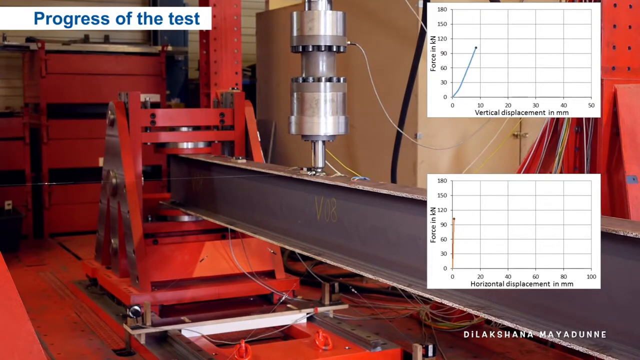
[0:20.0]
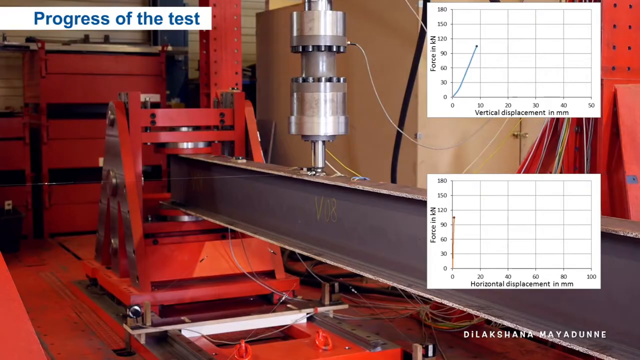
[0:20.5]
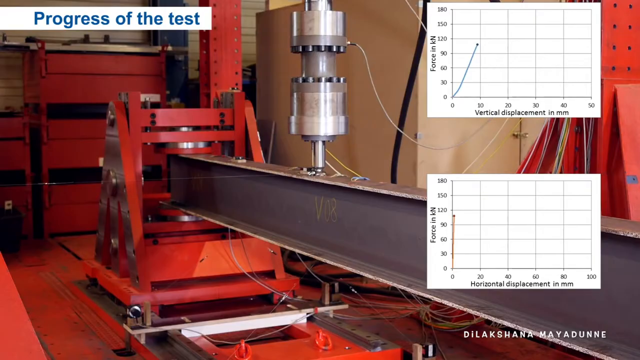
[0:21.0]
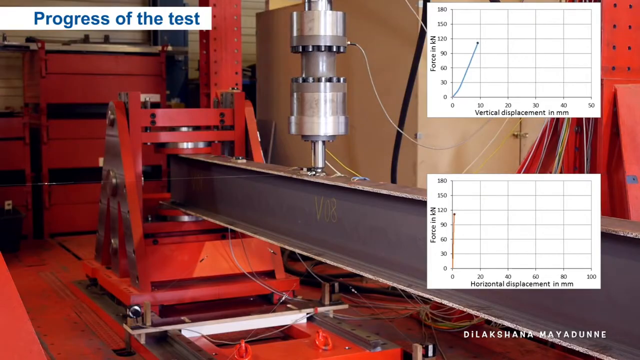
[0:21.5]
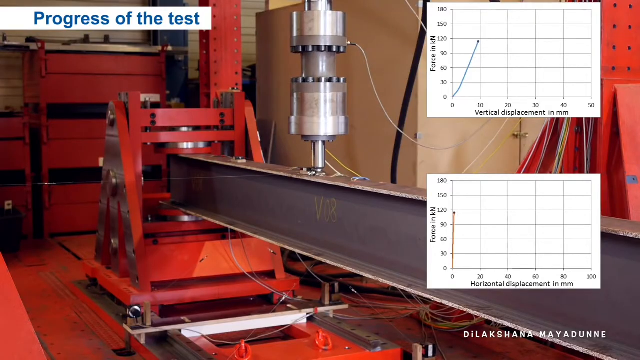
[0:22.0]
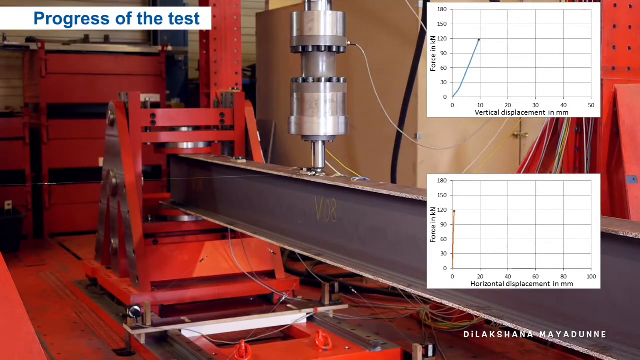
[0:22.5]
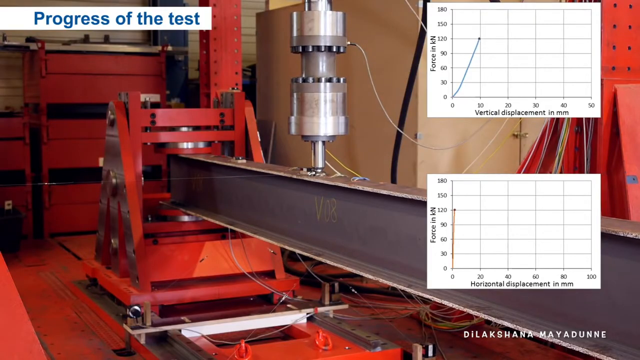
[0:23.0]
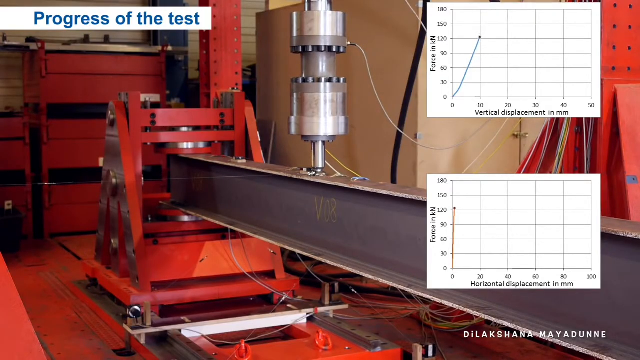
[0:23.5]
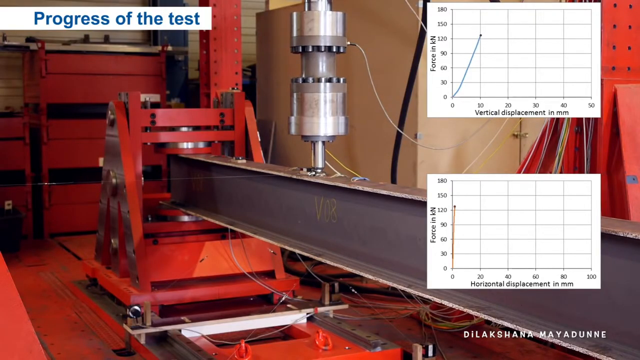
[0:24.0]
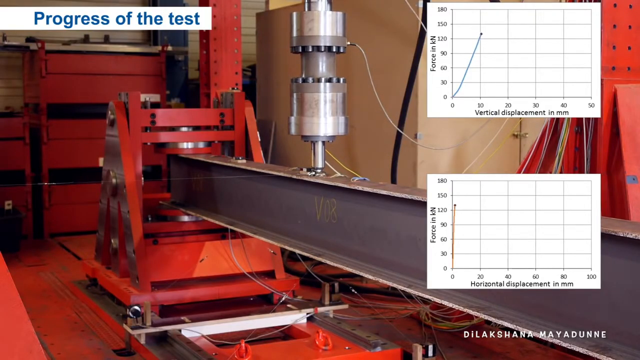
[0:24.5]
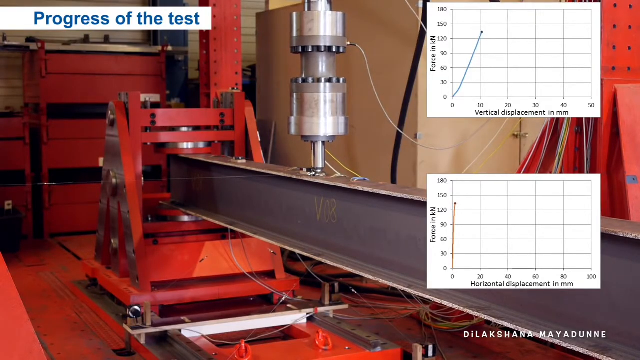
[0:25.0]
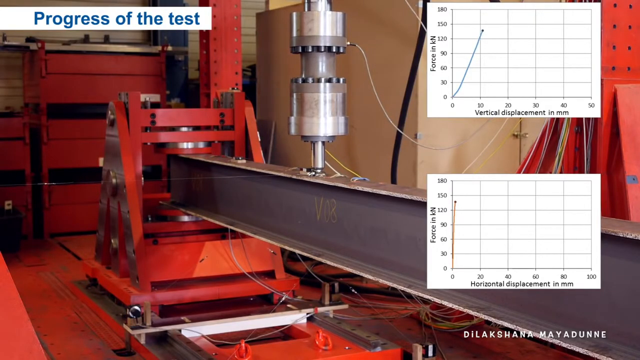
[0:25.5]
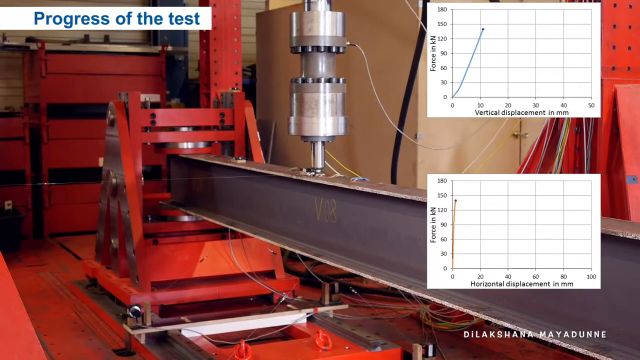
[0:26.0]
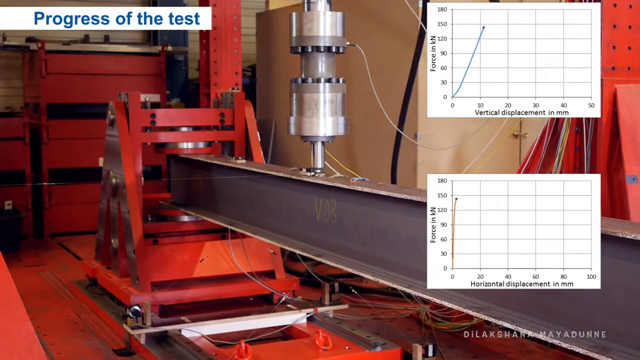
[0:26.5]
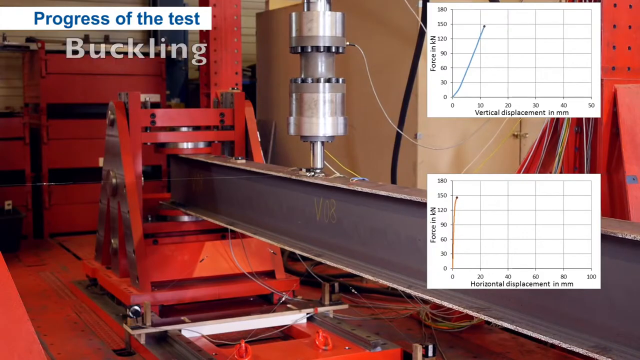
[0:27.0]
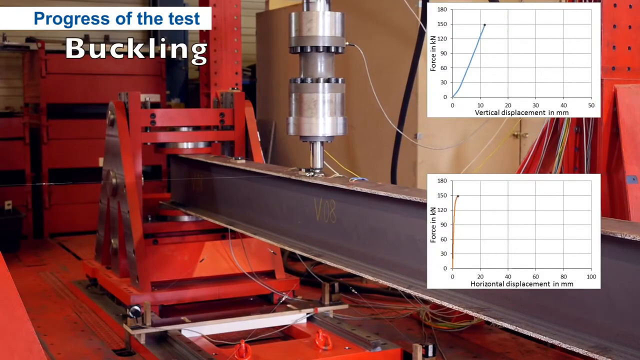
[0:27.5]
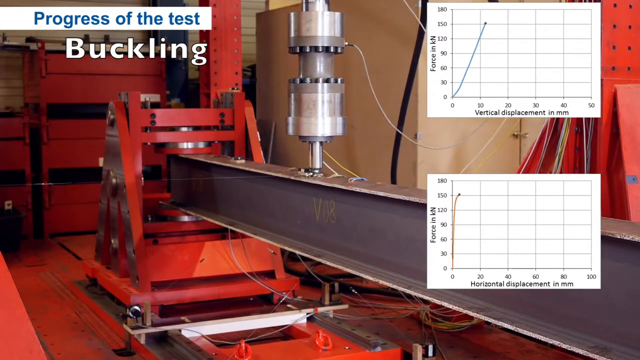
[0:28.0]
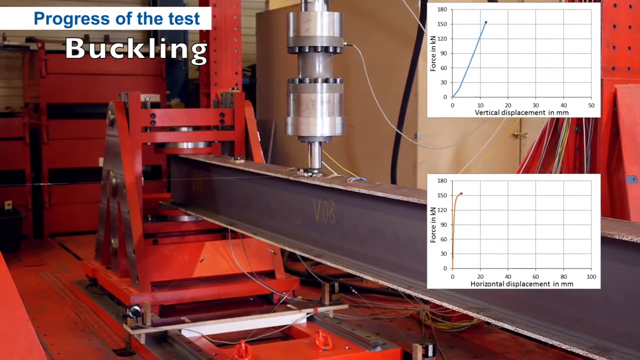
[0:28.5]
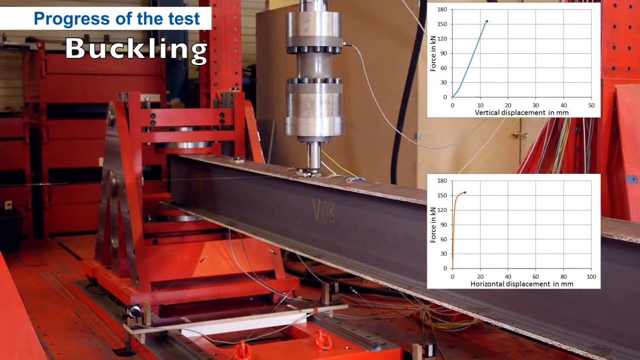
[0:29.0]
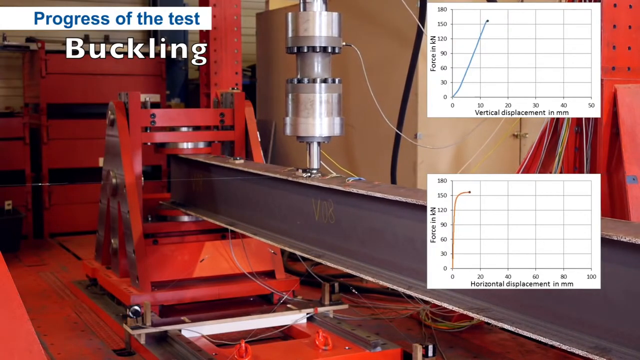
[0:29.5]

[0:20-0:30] A metal thread runs down the middle of the screen; it is part of a machine and appears to indicate some kind of movement. Two graphs are overlaid on the screen, with force in kilonewtons on the y-axis and horizontal displacement in millimeters on the x-axis, apparently showing a change in force over displacement. The laboratory background contains various objects and wires scattered throughout. In the top left of the screen, text reads "progress of the test".